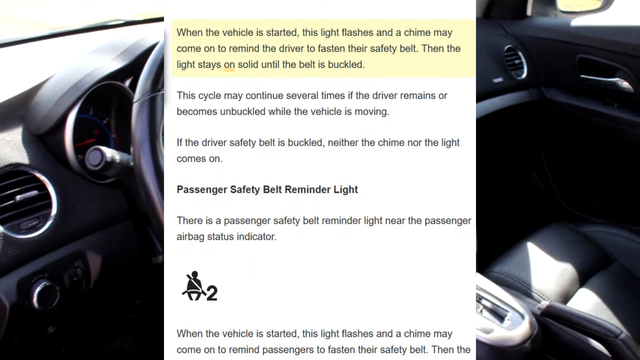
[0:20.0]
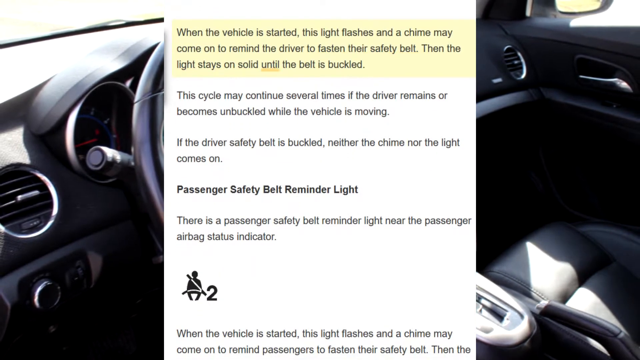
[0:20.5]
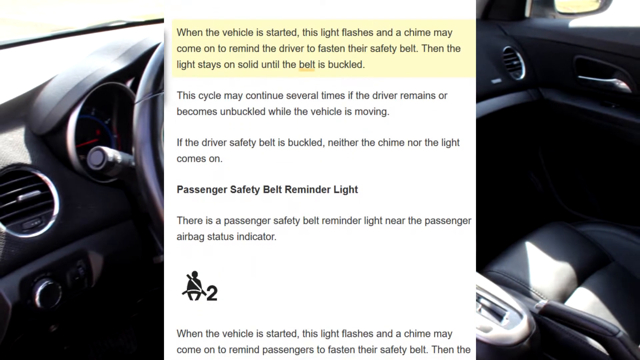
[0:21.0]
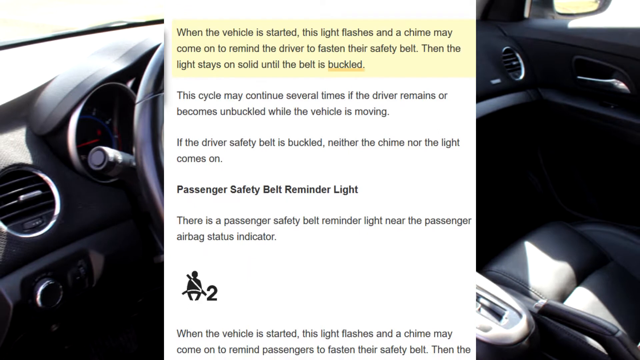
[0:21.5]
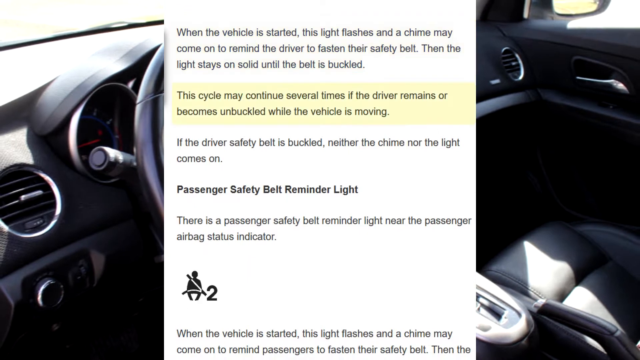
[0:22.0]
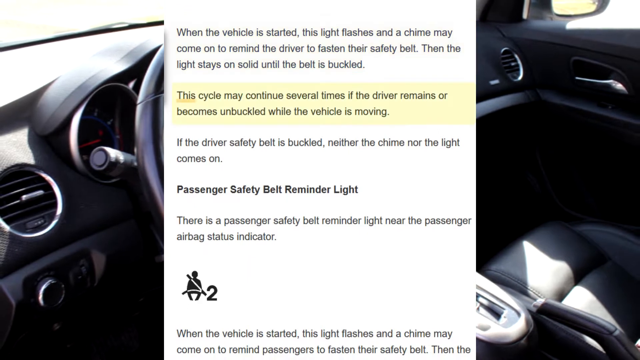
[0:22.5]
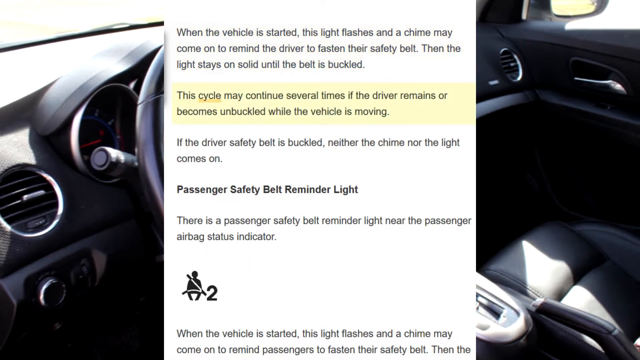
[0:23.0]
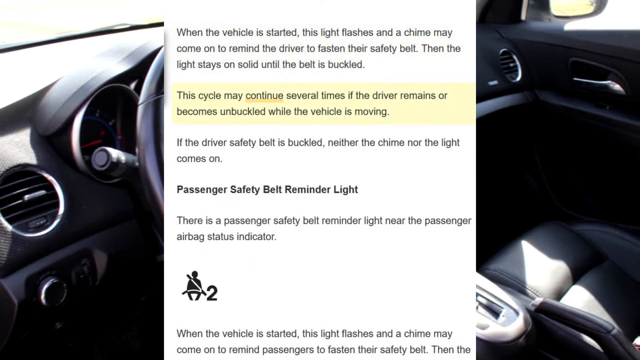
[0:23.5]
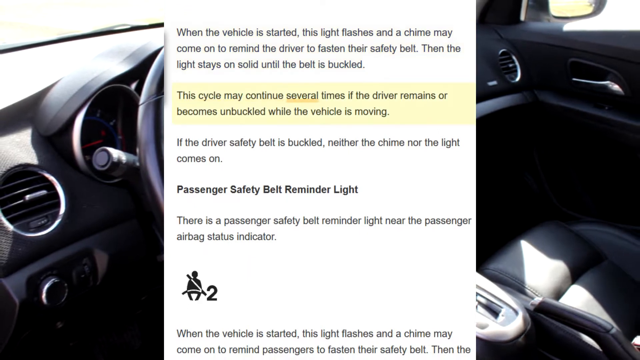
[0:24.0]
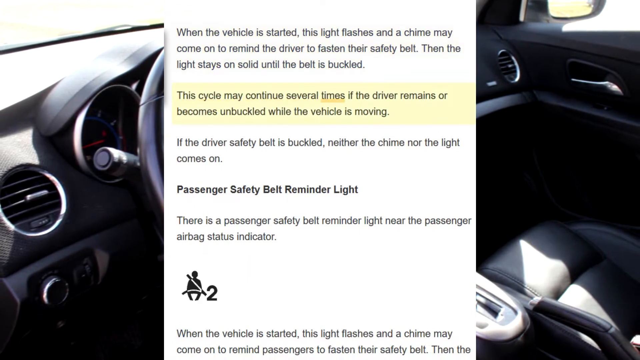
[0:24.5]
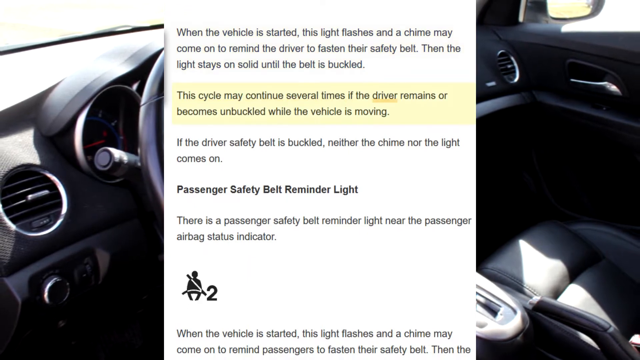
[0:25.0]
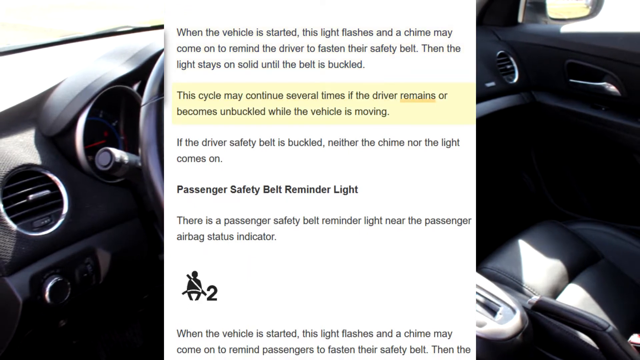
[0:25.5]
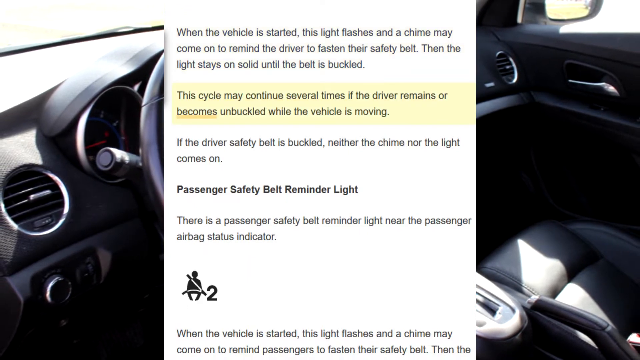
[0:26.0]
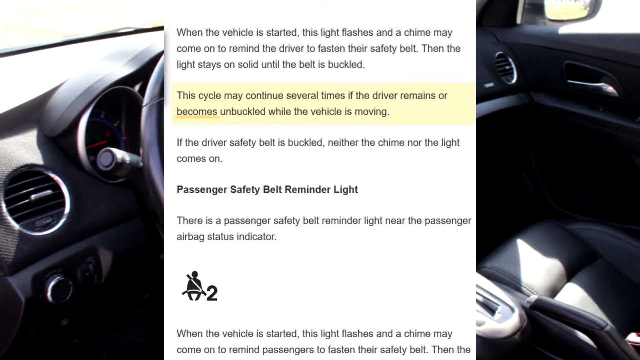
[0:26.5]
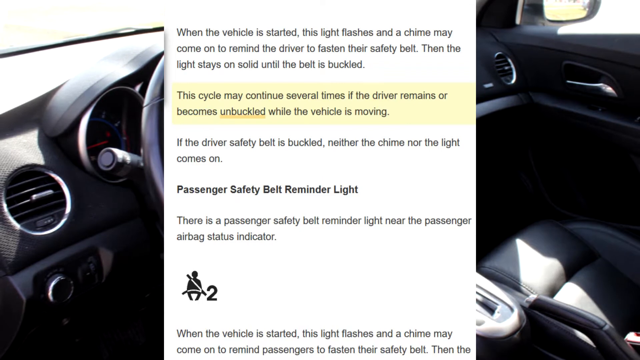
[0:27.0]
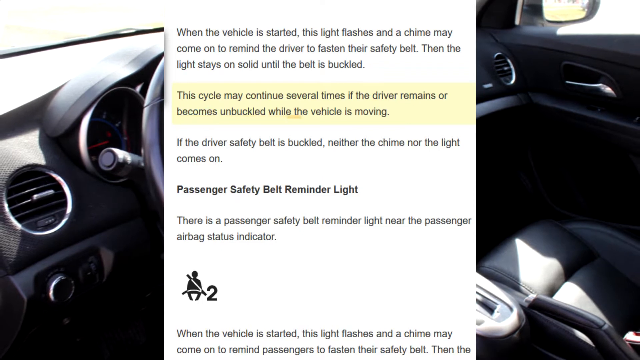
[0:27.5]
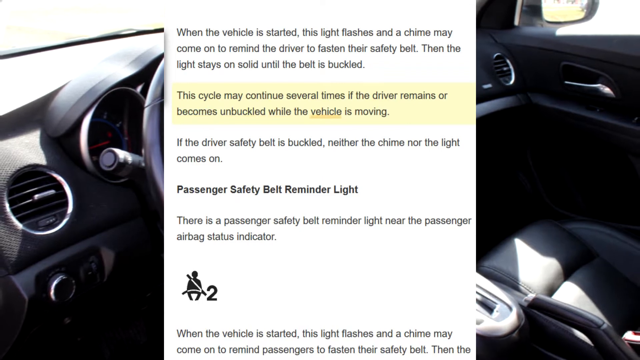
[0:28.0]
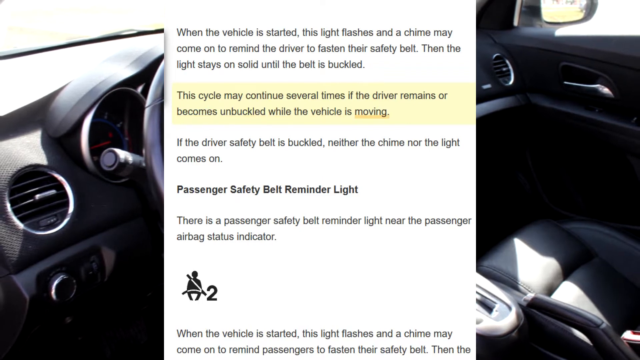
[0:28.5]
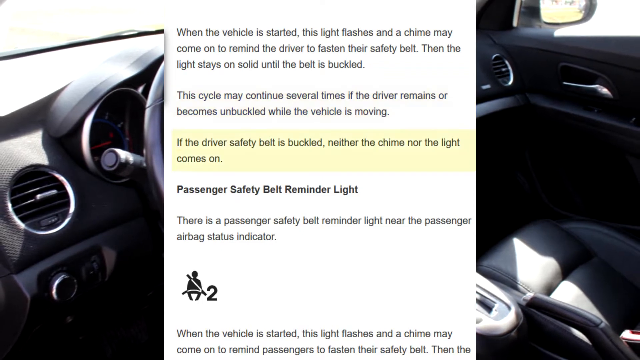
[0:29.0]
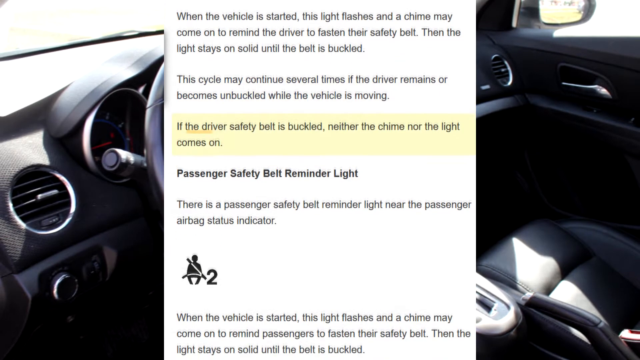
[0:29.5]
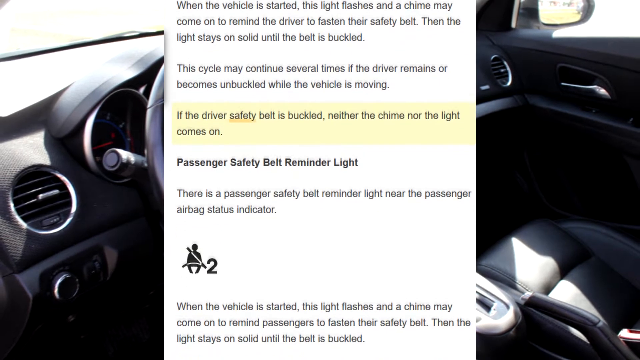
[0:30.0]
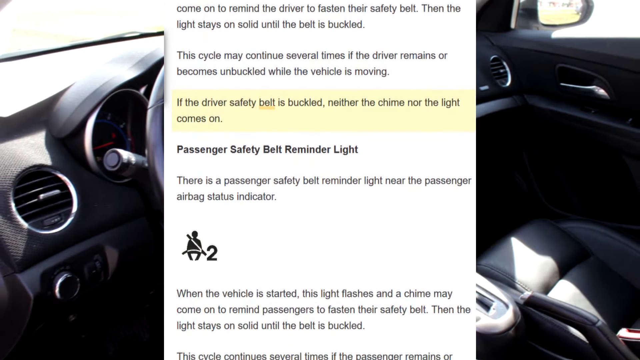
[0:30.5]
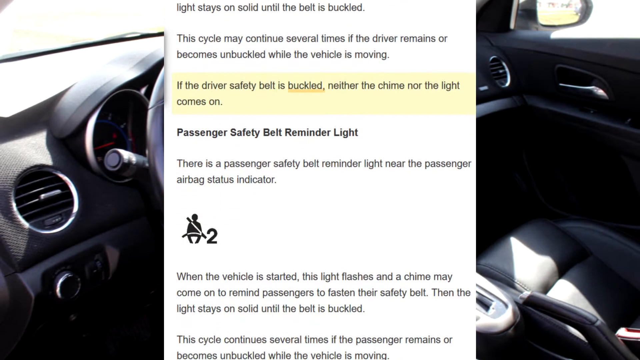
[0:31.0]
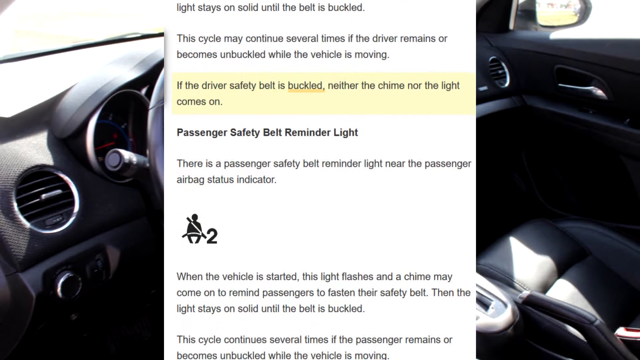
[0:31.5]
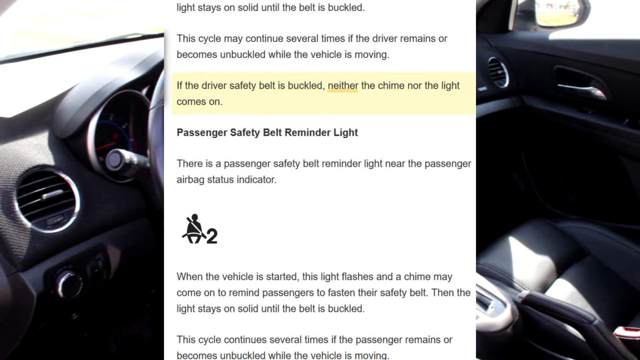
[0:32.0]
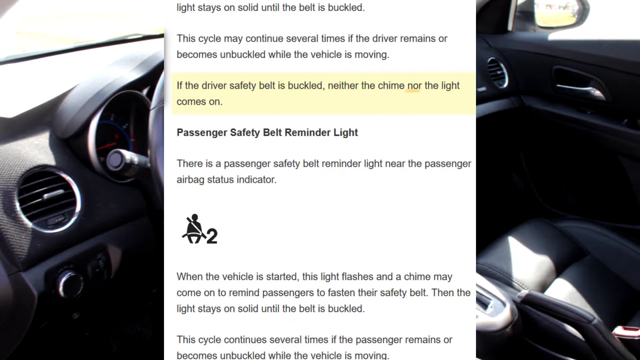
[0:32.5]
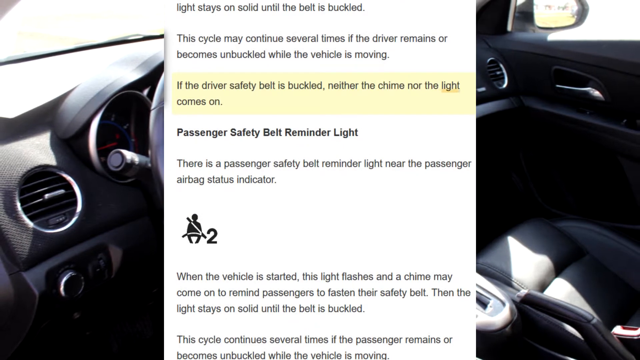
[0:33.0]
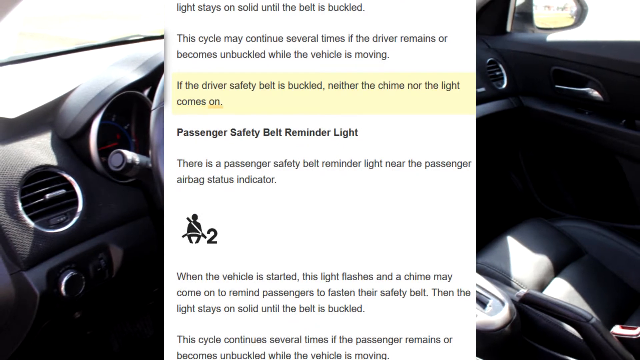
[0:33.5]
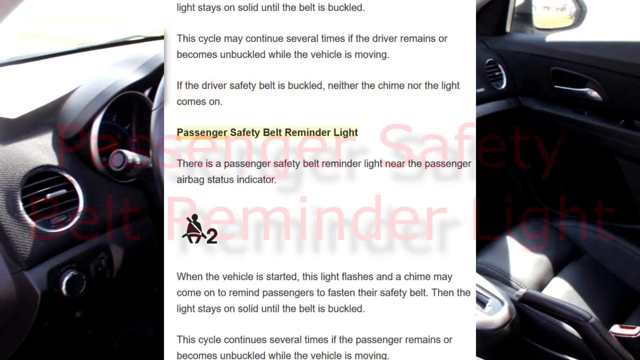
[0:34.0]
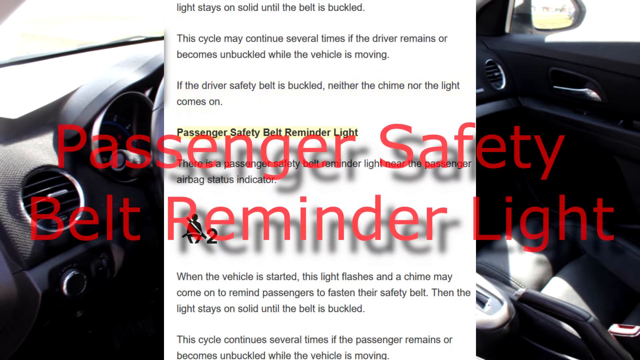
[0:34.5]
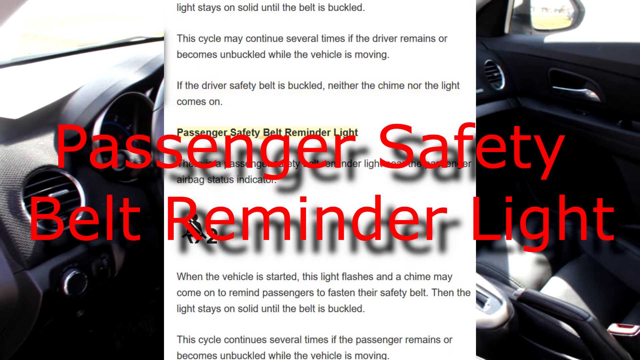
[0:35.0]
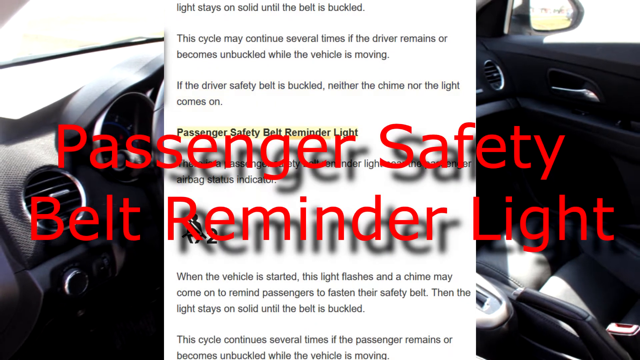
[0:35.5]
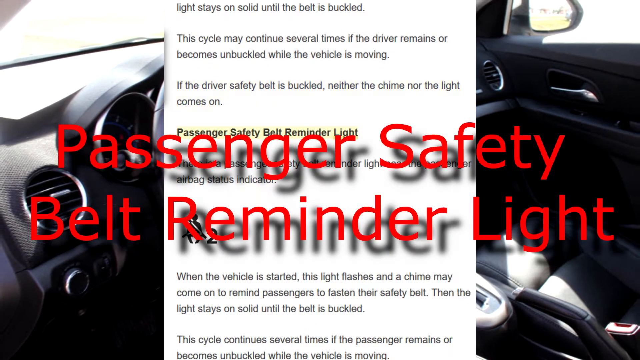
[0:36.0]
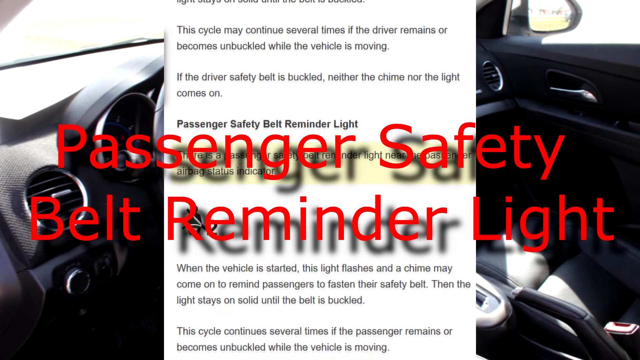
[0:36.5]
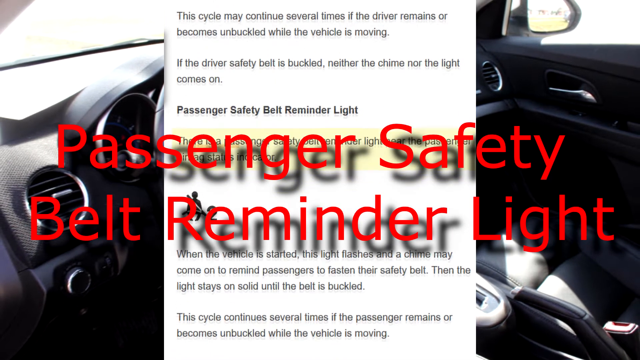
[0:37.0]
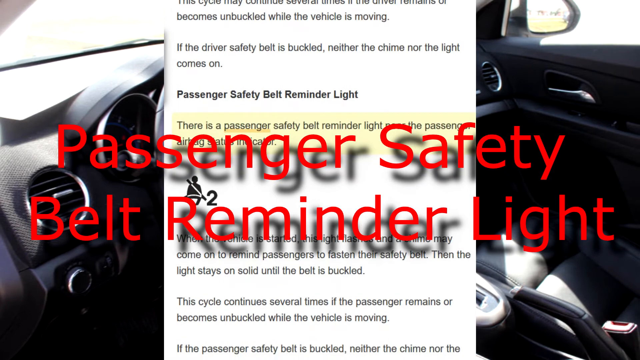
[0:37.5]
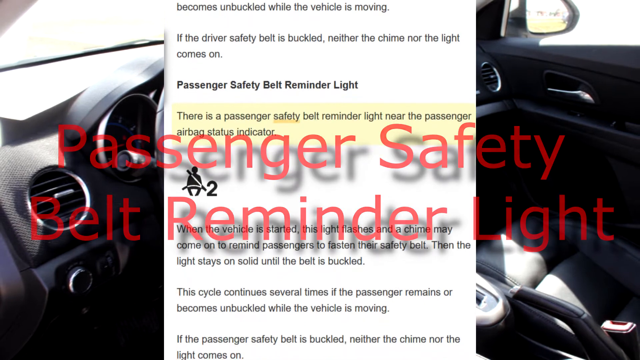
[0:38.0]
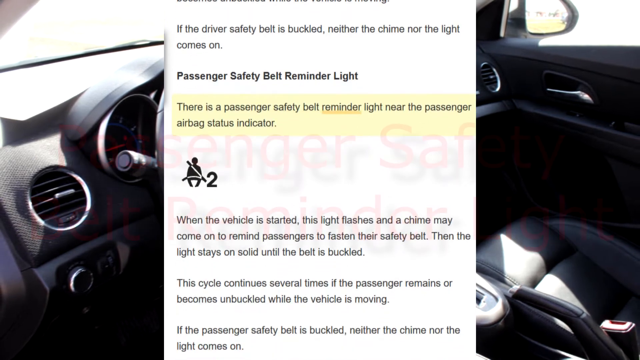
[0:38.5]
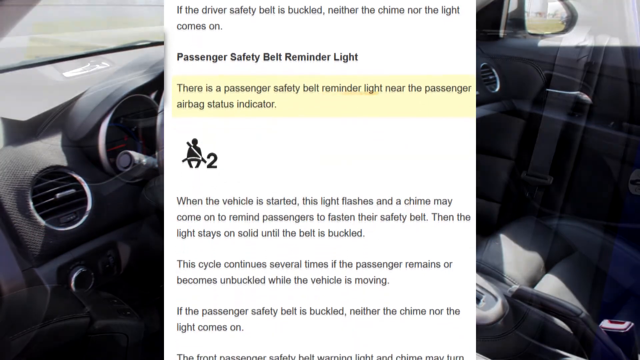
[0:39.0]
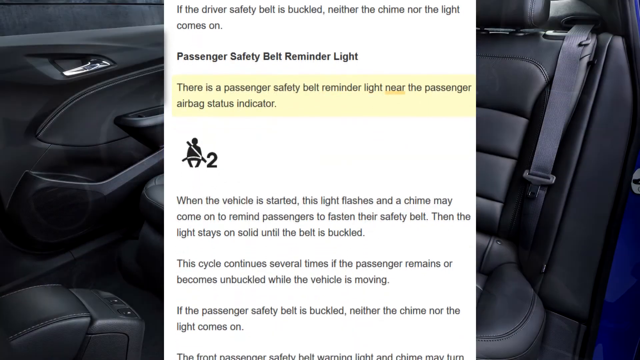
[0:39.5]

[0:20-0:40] The background still shows a car's interior. The text in the center of the screen is highlighted section by section with a yellowish background. It reads "when the vehicle is started this light flashes and a chime may come on to remind the driver to fasten their safety belt. Then the light stays on solid until the belt is buckled." Below that, it reads "the cycle may continue several times if the driver remains or becomes unbuckled while the vehicle is moving," and the words are underlined one by one with an orange line. The next text reads "if the driver safety belt is buckled neither the chime nor the light comes on." Large red text appears on the screen again, reading "passenger safety belt reminder light." The user scrolls down, and the next sentence reads "there is a passenger safety belt reminder light near the passenger airbag status indicator."